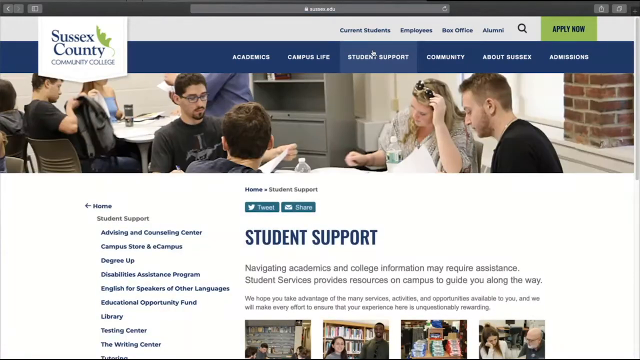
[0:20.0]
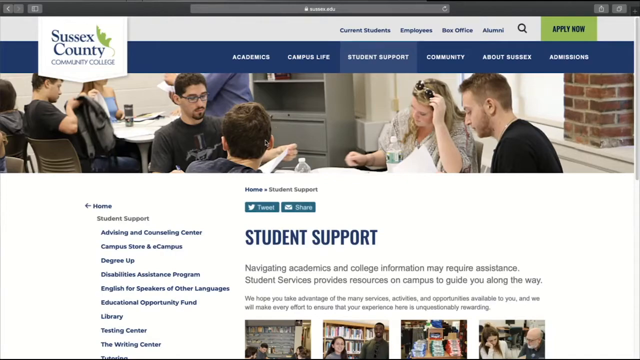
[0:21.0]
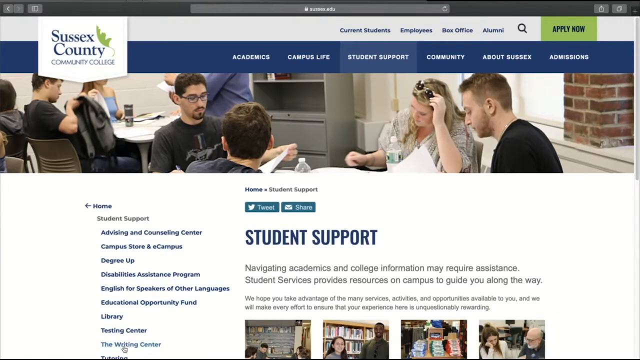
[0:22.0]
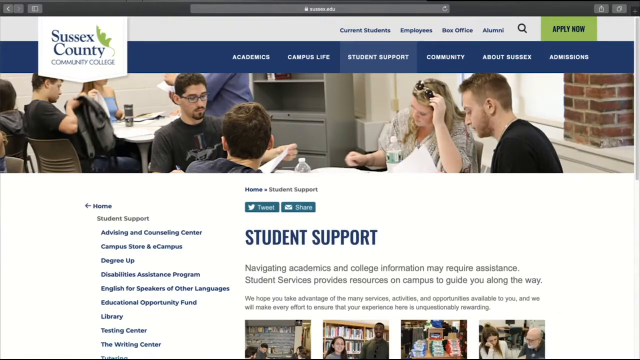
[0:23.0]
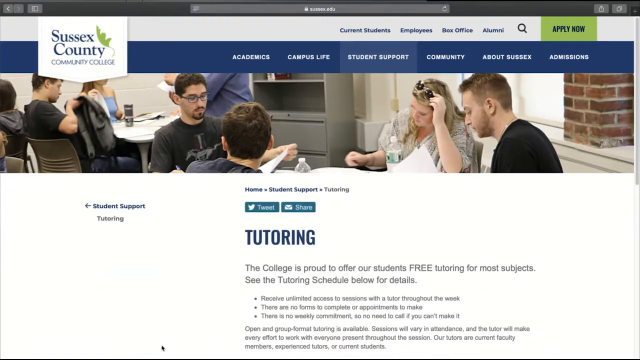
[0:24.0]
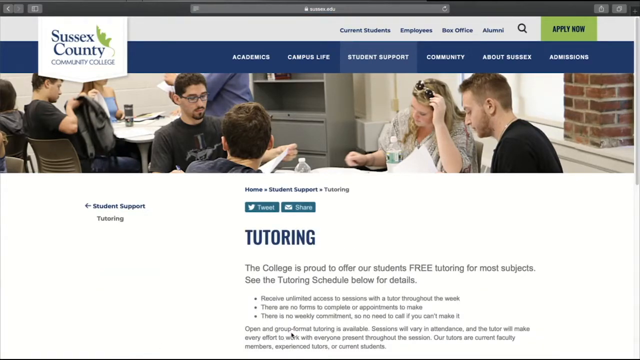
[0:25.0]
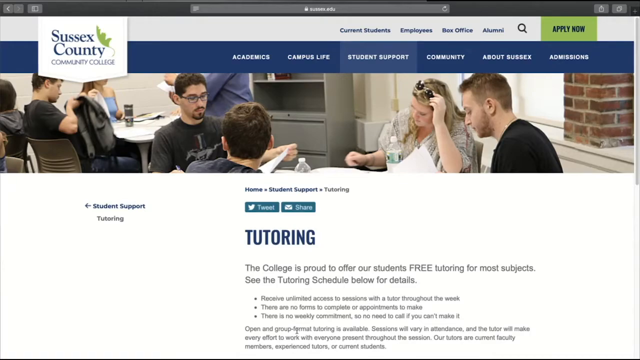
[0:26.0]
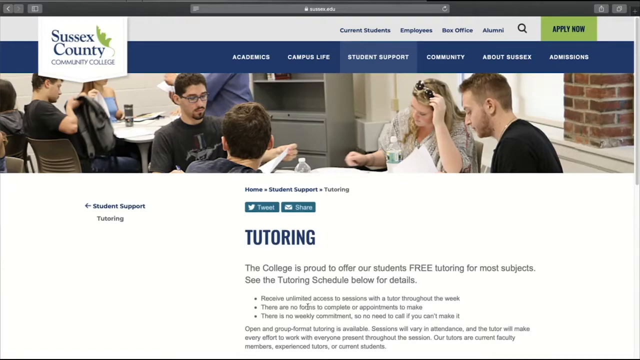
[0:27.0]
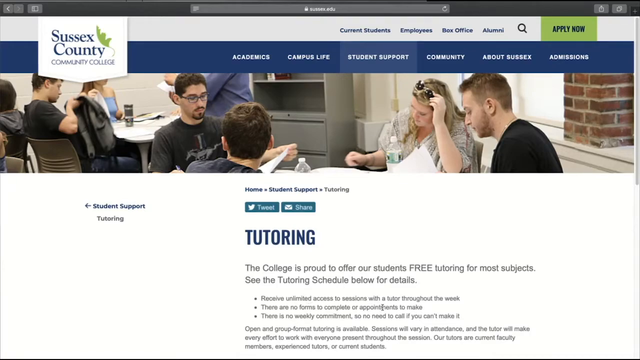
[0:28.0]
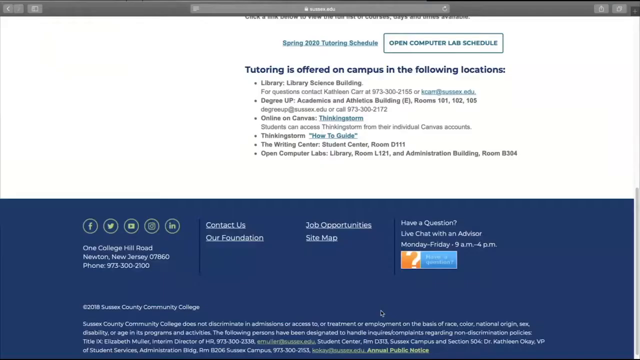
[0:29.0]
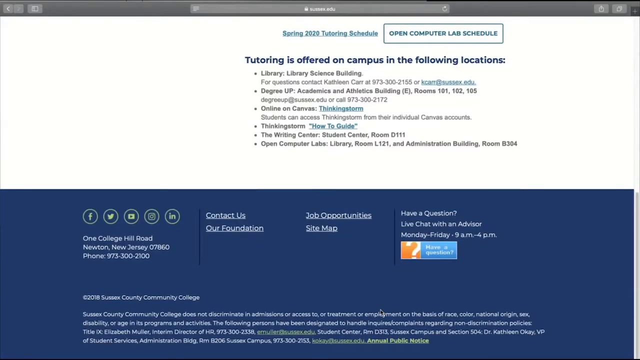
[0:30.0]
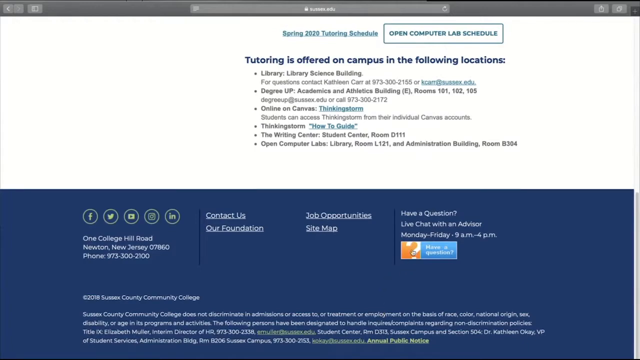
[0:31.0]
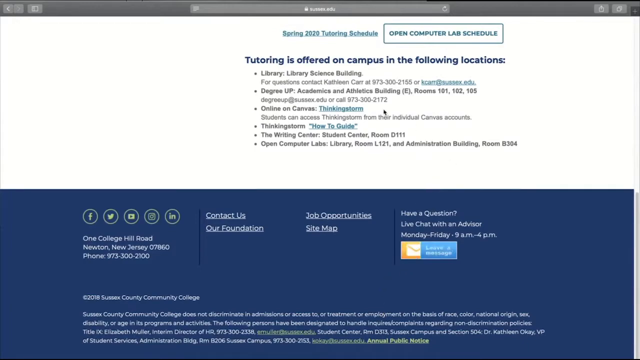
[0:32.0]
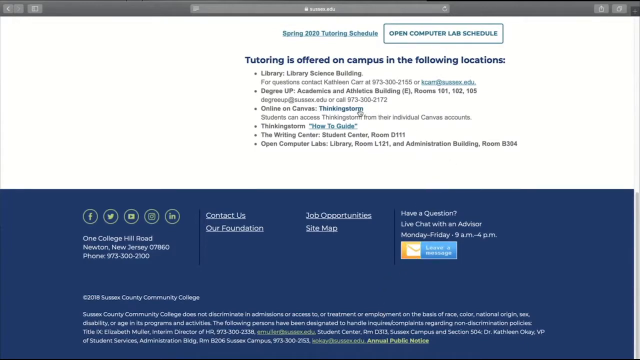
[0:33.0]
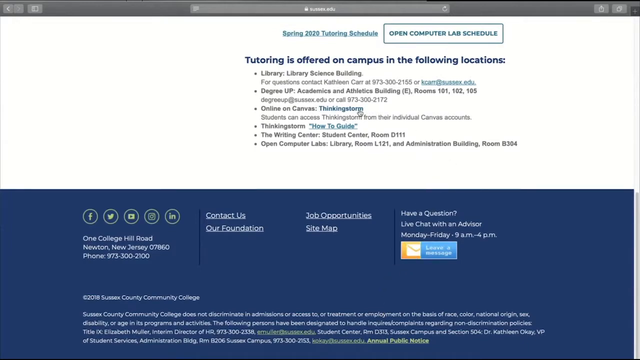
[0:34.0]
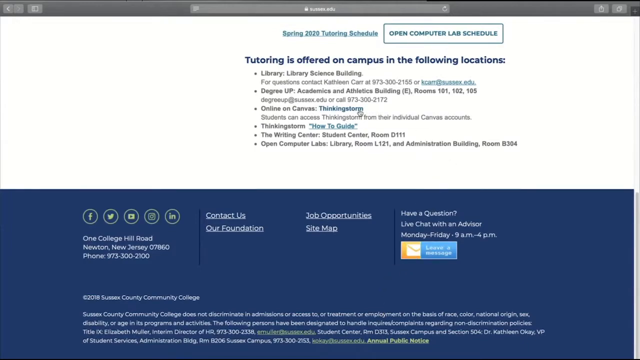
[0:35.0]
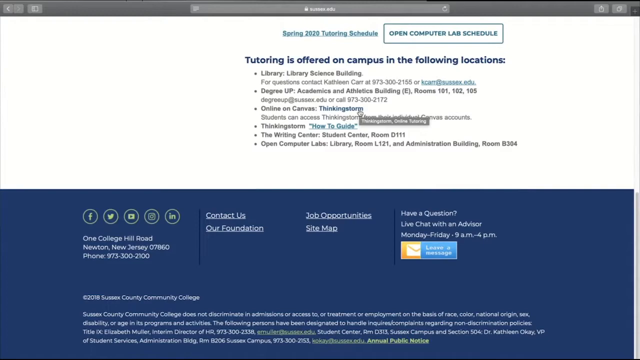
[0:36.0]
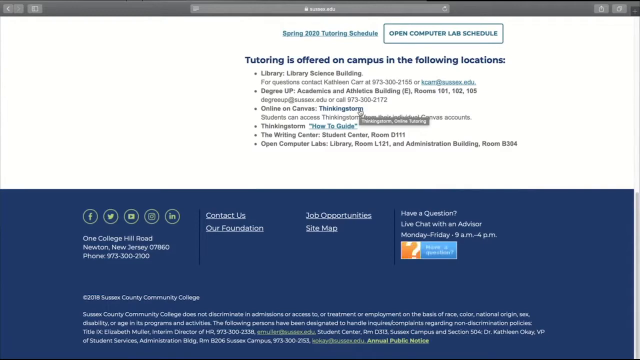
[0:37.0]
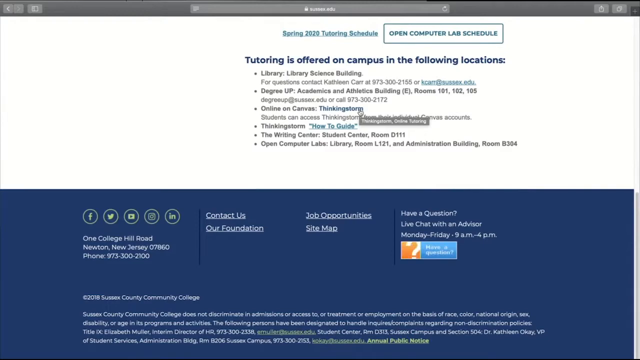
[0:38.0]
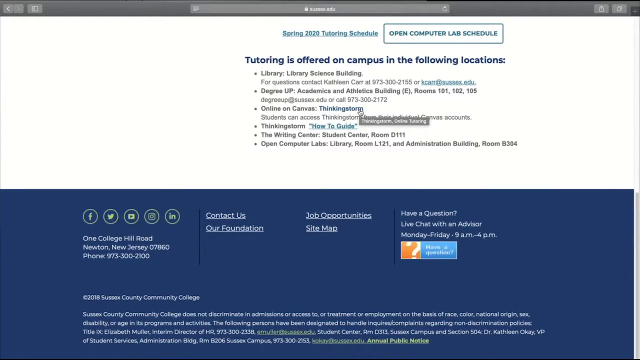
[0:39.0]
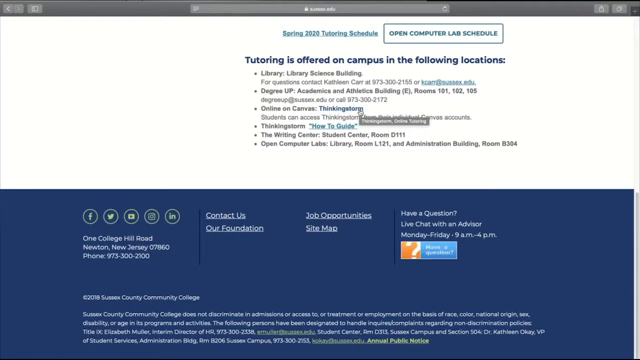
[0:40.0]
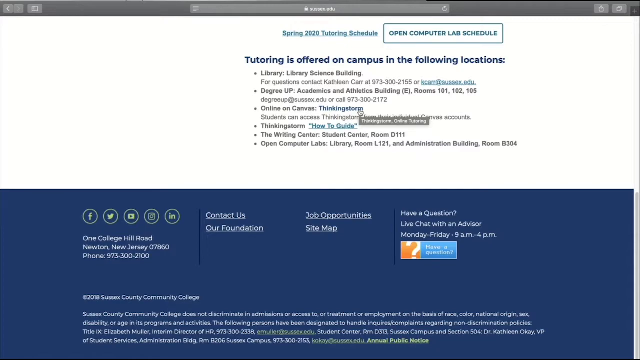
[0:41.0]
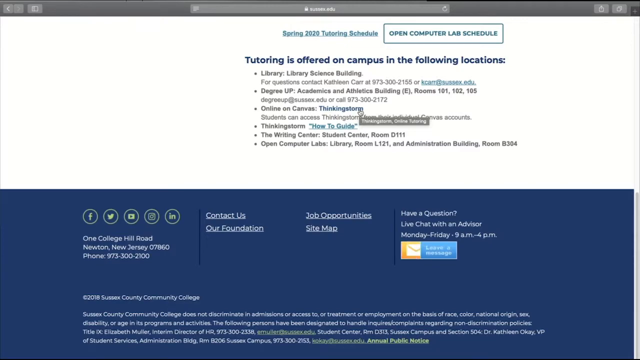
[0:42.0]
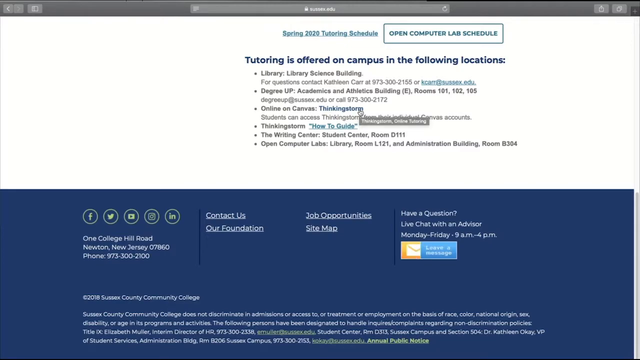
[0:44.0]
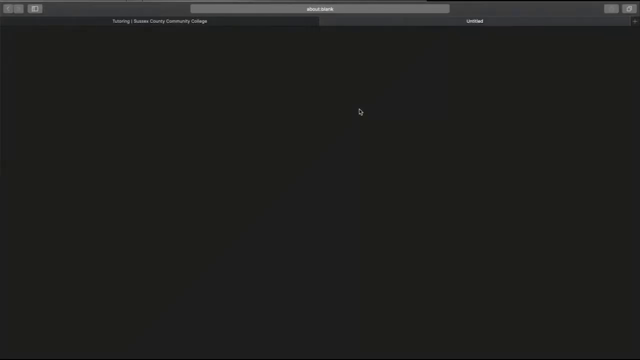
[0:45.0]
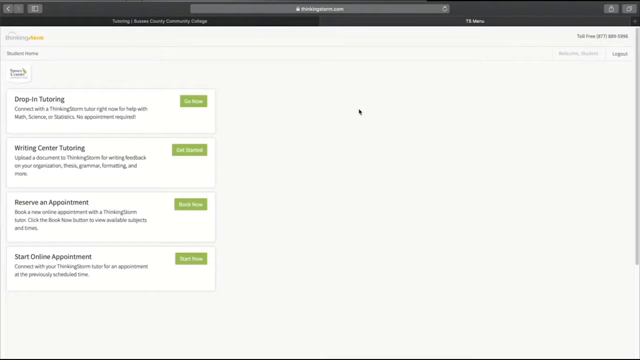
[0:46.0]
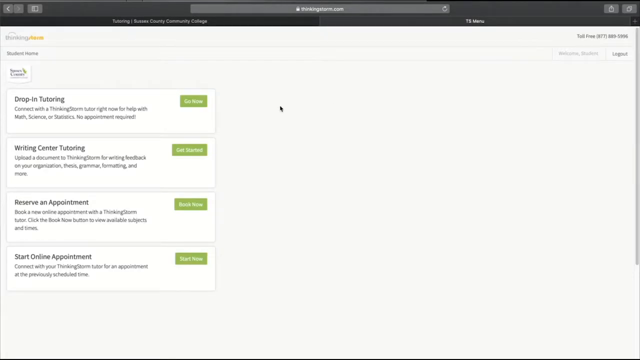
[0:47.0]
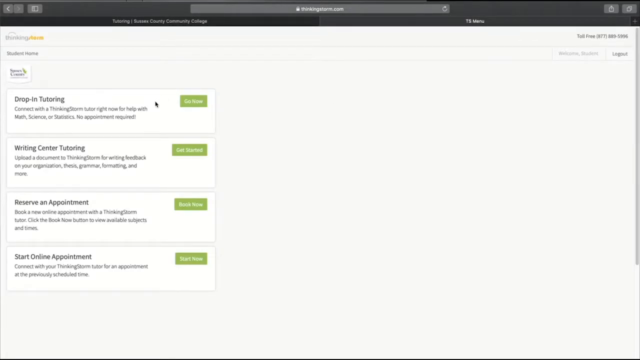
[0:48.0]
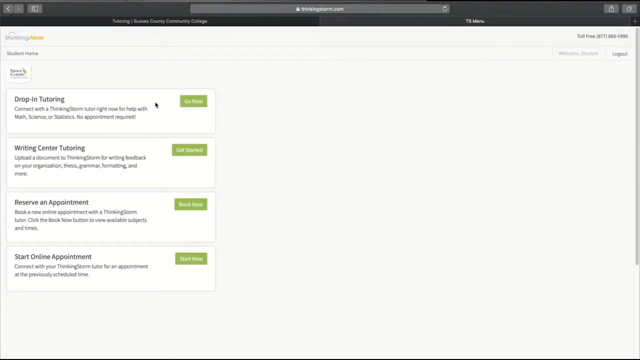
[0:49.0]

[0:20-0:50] A page of Sussex County Community College is open on a tab called "Student Support". After a while the cursor clicks on another tab, perhaps a category within the Student Support page, called "Tutoring", which holds a lot of information about the tutoring the college offers its students. The page is scrolled down to the bottom, which lists where tutoring is offered: on campus in several locations including the library, online on Canvas, in ThinkingStorm (apparently some kind of app on the site), at the Writing Center, and in Open Computer Labs in the library and other administration buildings. The cursor clicks on Canvas ThinkingStorm, which redirects to a site called ThinkingStorm.com. It shows different categories of tutoring: drop-in tutoring, offering help with math, science and statistics, and writing center tutoring, offering feedback on thesis, grammar, formatting and more. There are also tabs for reserving an appointment and for starting an online appointment, four tabs in total.